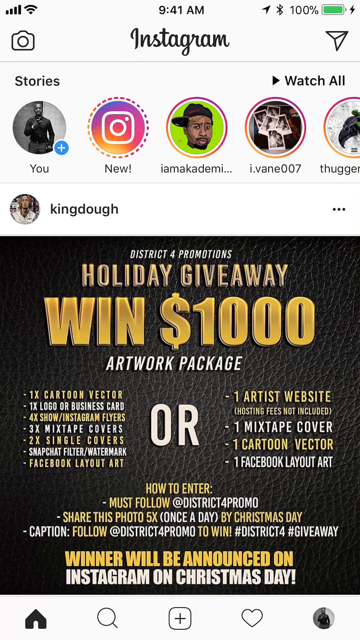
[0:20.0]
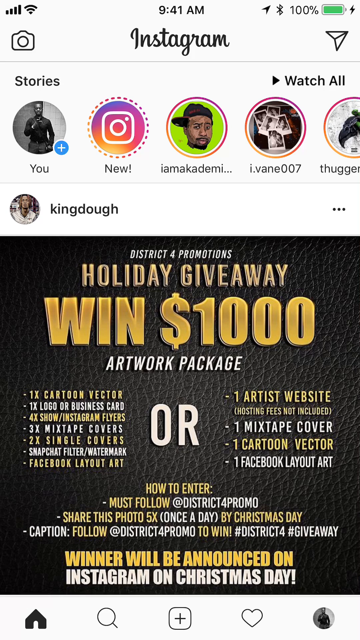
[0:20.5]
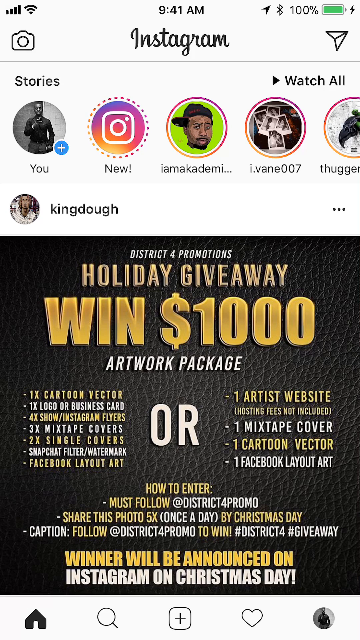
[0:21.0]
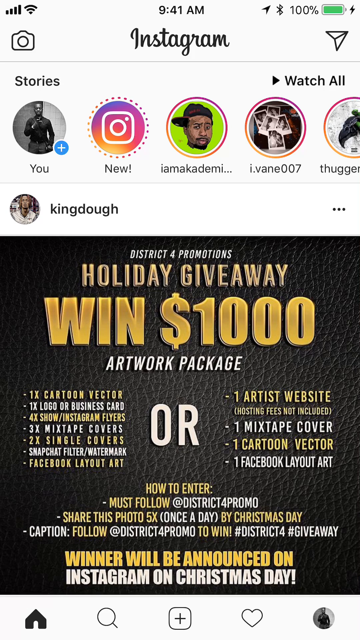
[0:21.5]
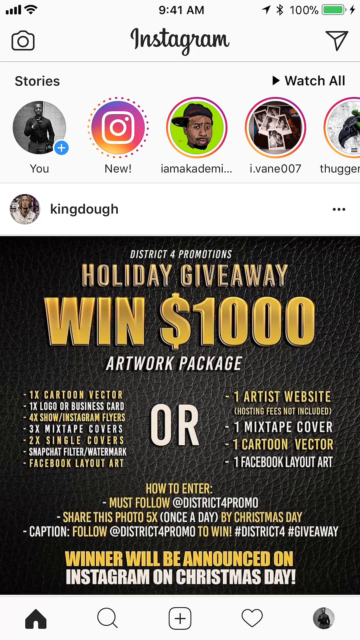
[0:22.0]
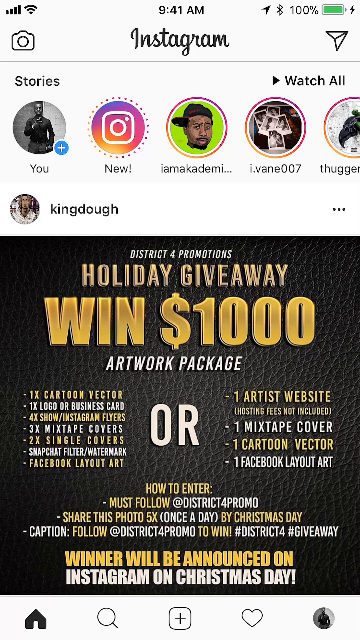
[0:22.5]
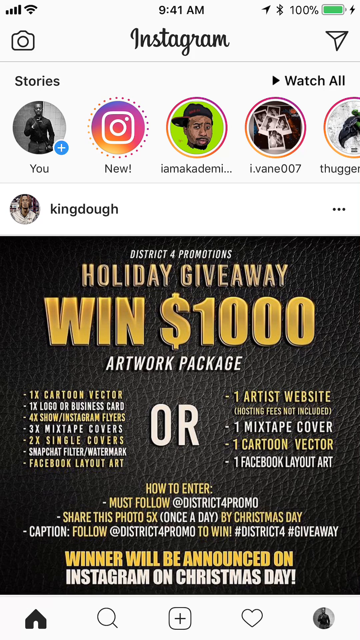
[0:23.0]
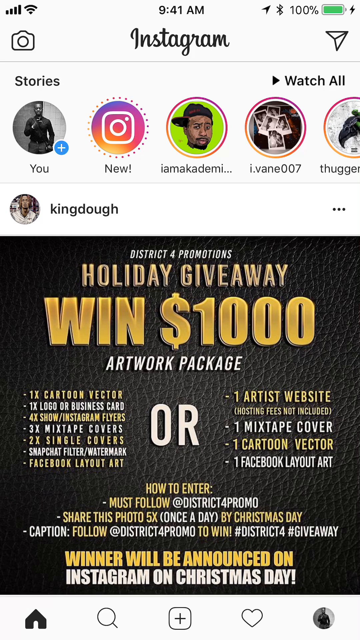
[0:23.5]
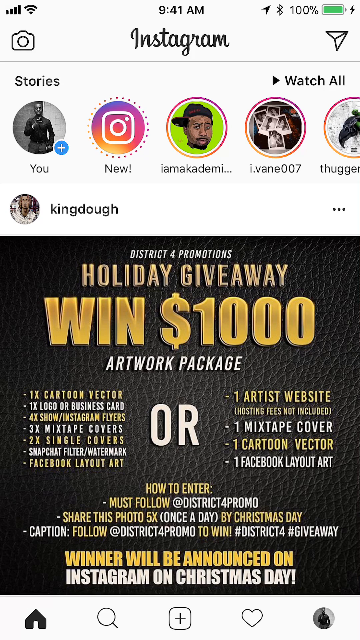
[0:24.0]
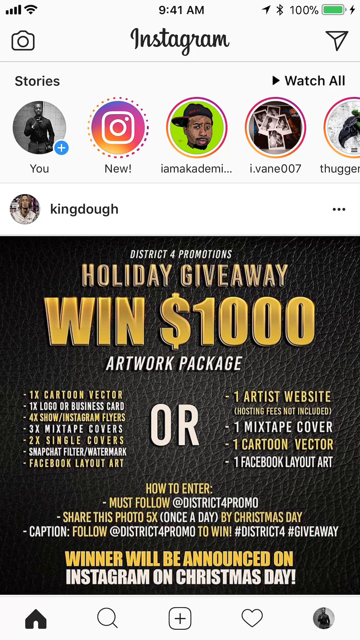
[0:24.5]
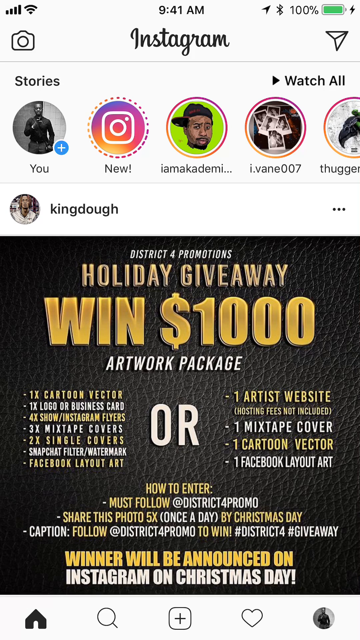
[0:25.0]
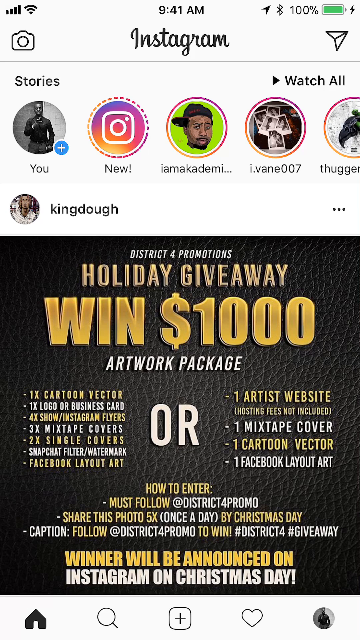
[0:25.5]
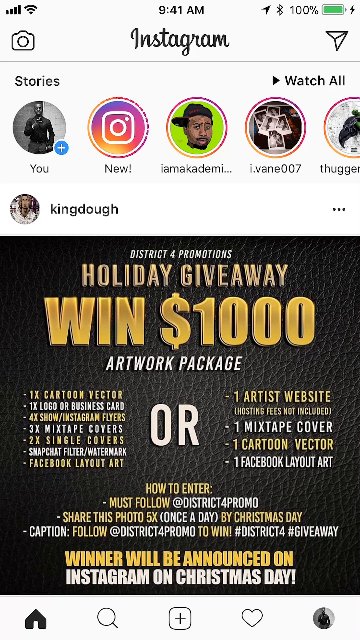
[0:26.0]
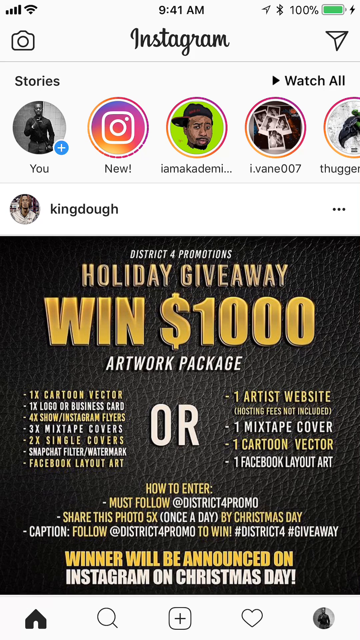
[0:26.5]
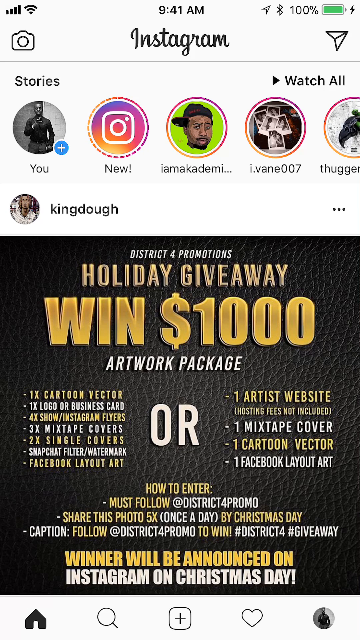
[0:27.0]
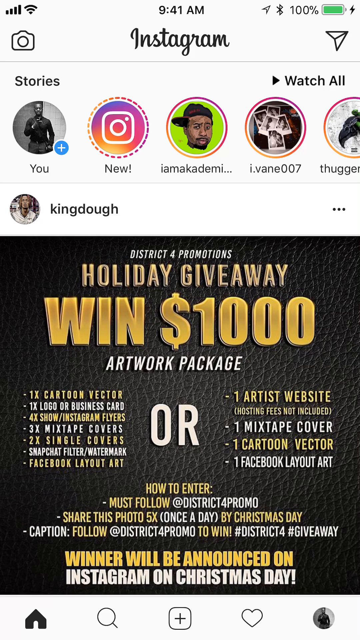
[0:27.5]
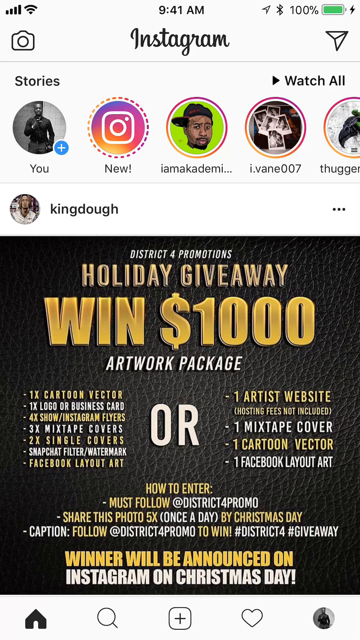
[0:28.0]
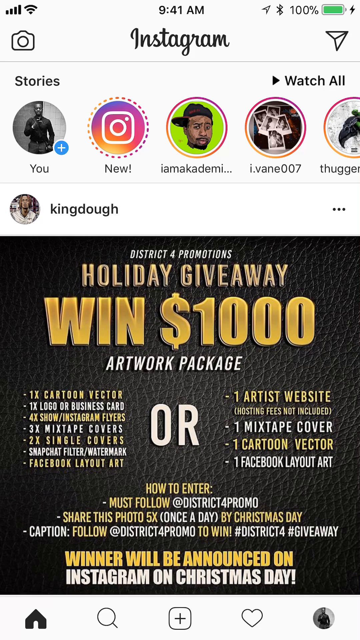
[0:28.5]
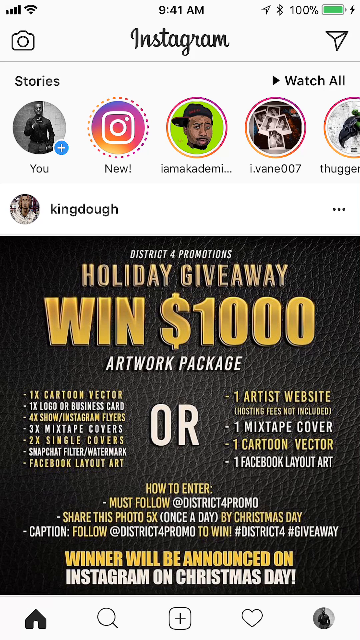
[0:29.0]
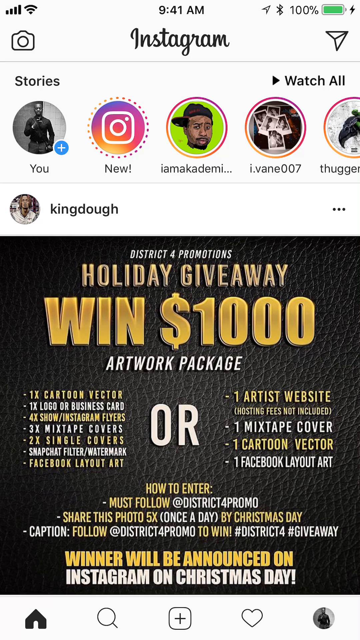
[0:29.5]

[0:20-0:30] The mobile view of the Instagram front page shows the Instagram wordmark at the top, the stories panel underneath with various unopened stories, and below that a post from King Do about a holiday giveaway to win $1,000 on a black background. The post has the text "holiday giveaway", "win $1,000", and "artwork package". On the left it lists several things you can win, then "or", and on the right several other things you can win. Underneath are directions on how to enter, and at the very bottom it says "winner will be announced on Instagram on Christmas Day". The text is a mixture of gold and white.